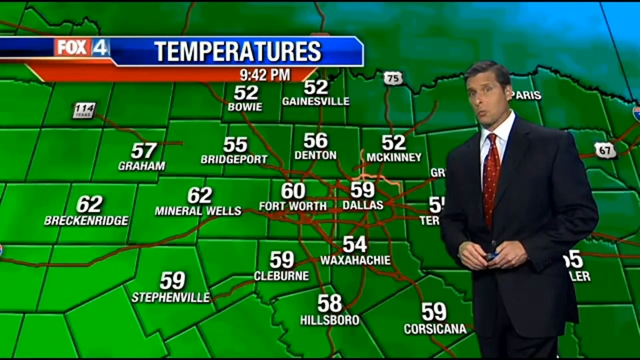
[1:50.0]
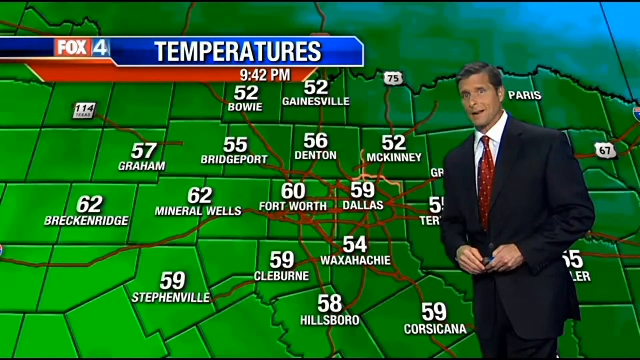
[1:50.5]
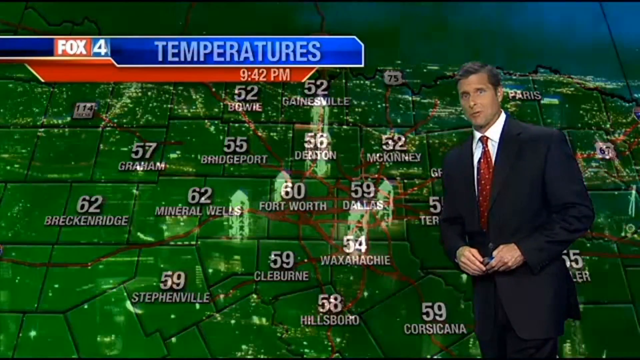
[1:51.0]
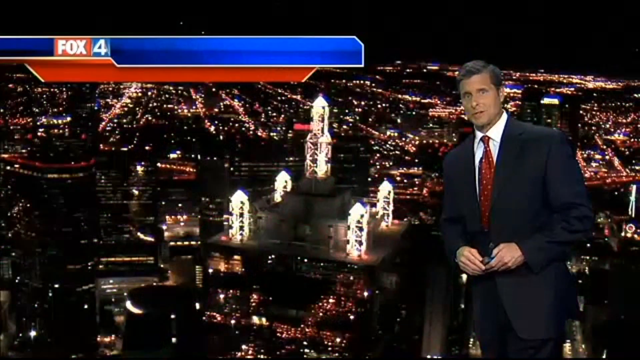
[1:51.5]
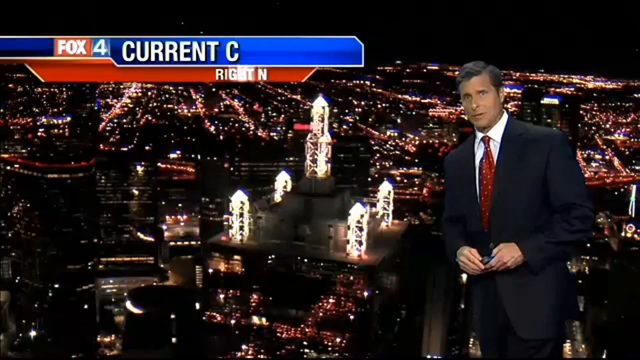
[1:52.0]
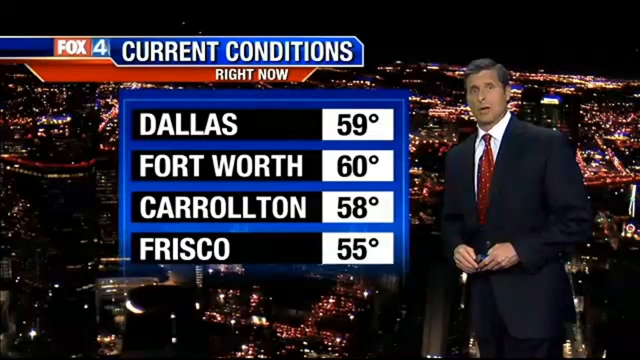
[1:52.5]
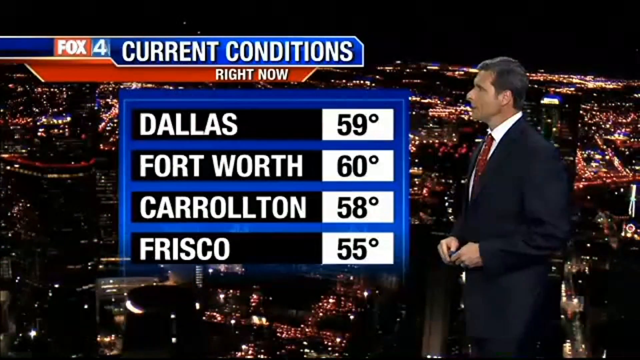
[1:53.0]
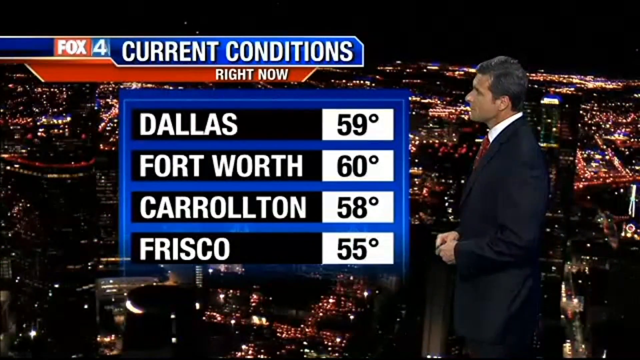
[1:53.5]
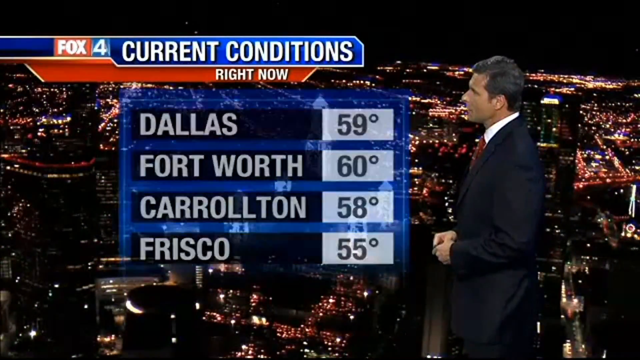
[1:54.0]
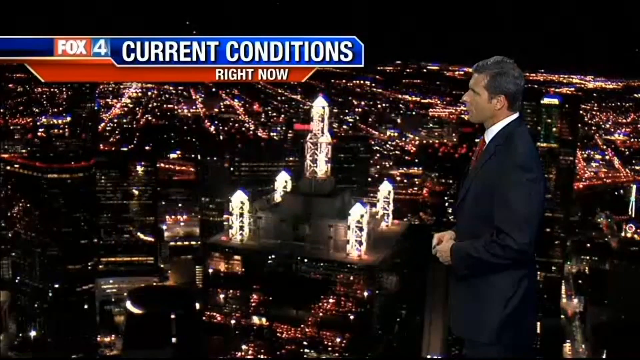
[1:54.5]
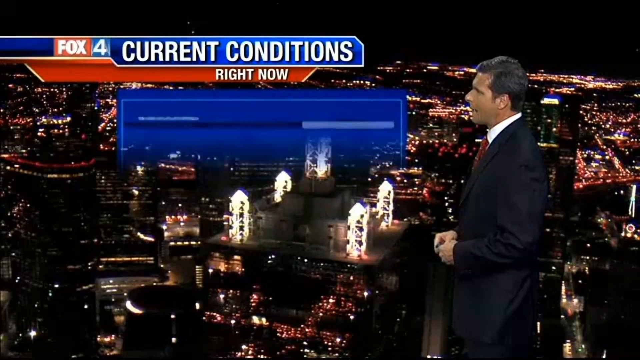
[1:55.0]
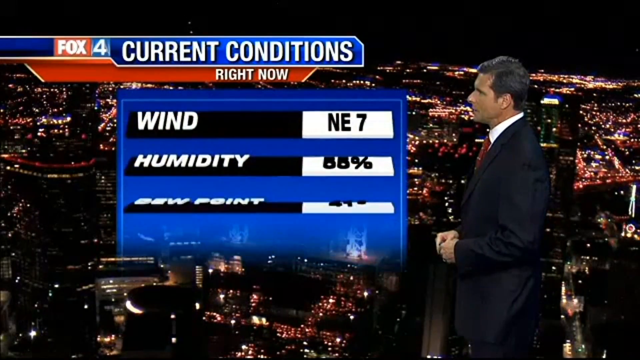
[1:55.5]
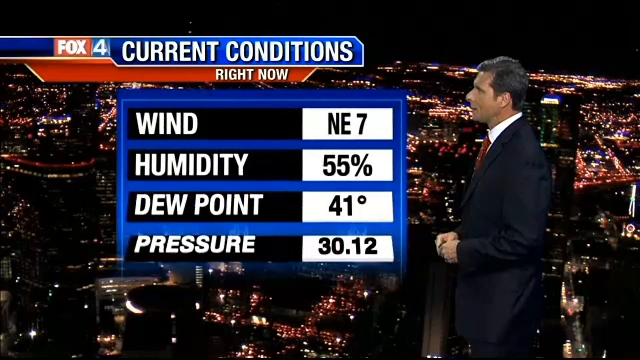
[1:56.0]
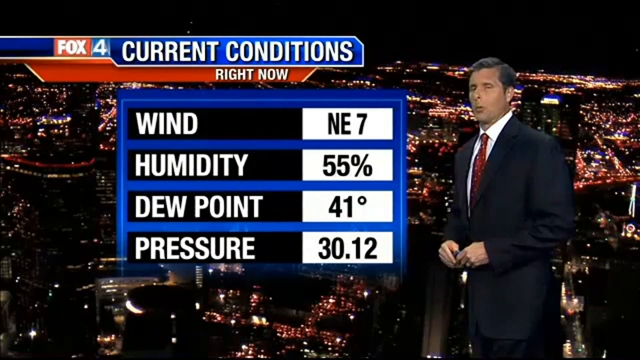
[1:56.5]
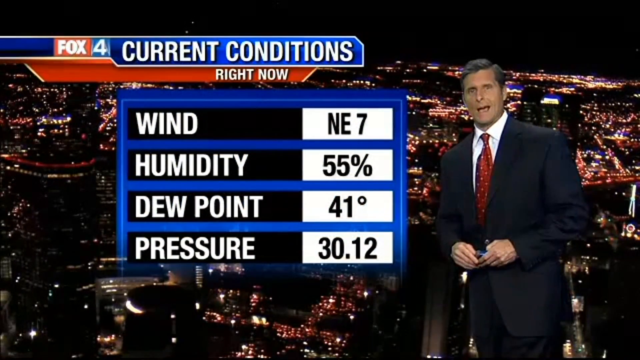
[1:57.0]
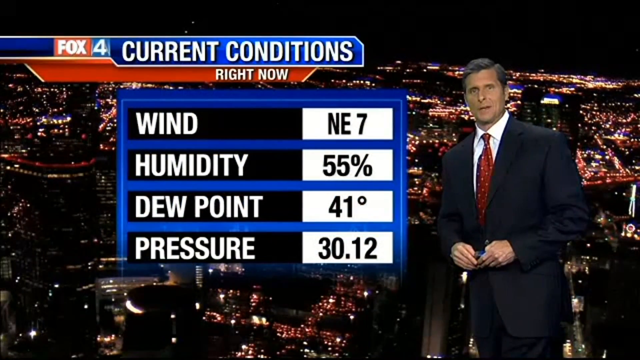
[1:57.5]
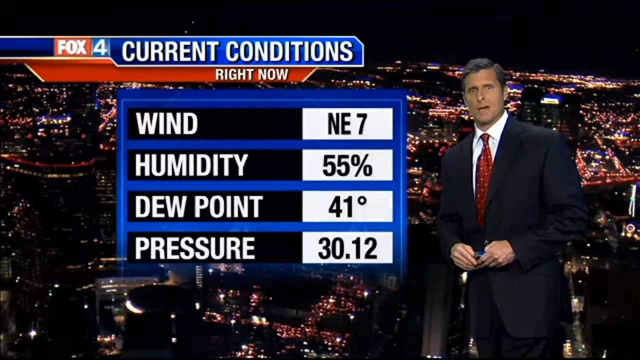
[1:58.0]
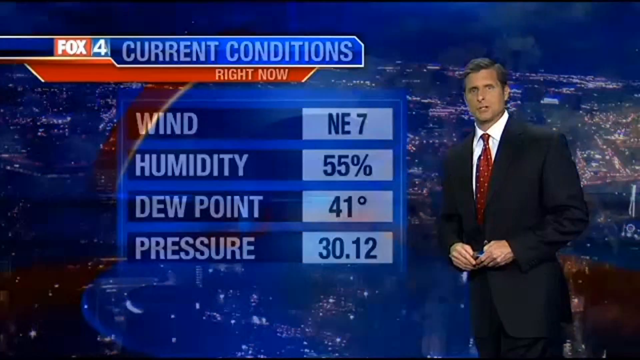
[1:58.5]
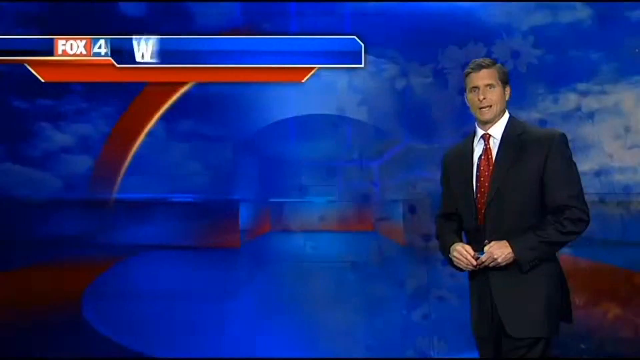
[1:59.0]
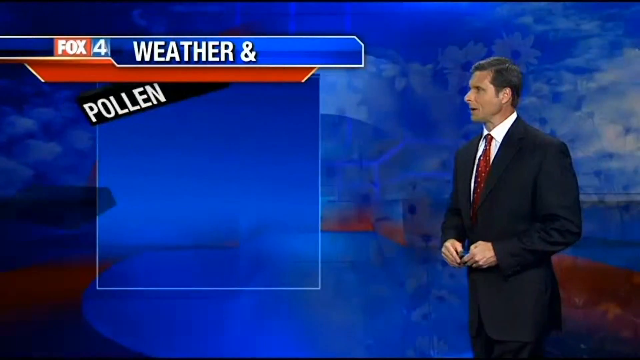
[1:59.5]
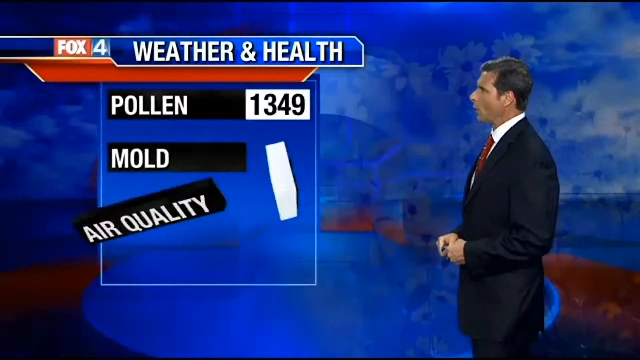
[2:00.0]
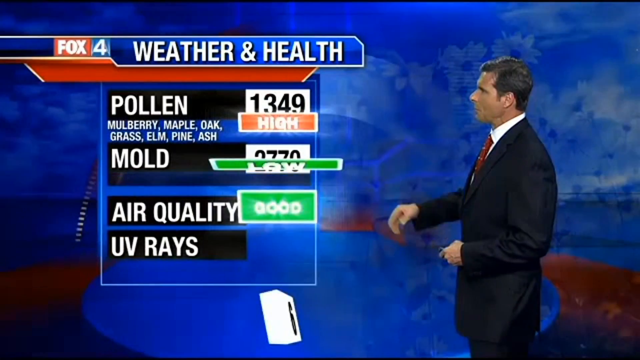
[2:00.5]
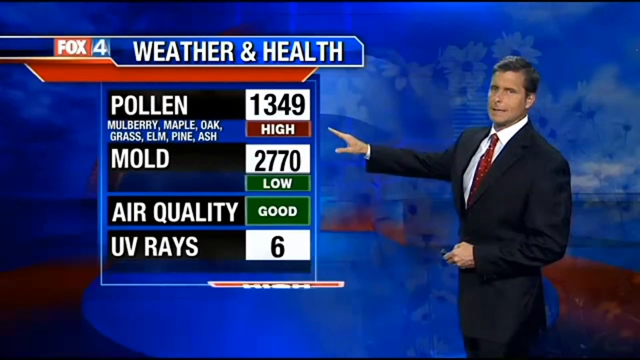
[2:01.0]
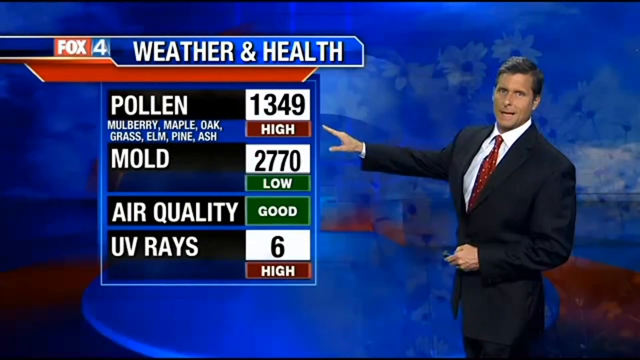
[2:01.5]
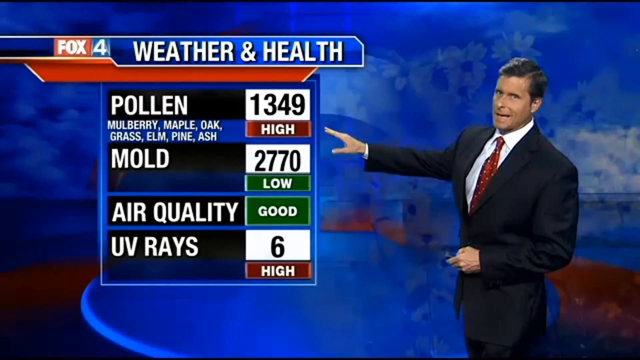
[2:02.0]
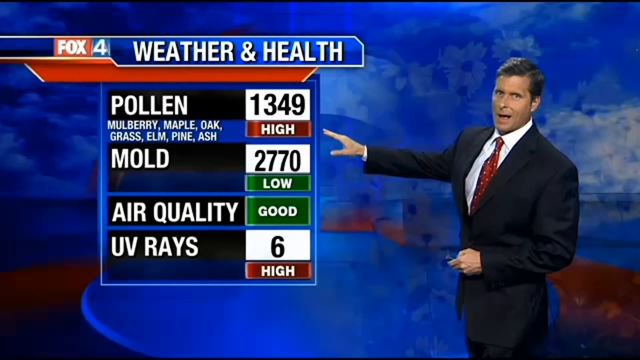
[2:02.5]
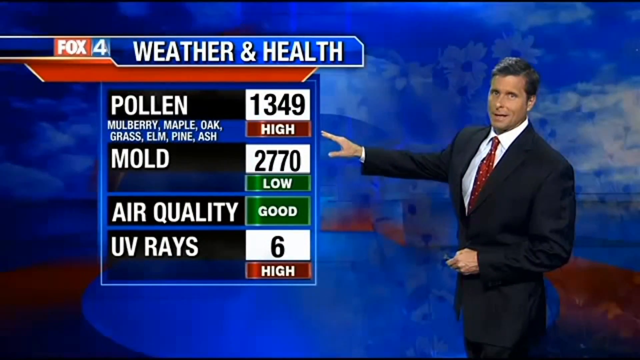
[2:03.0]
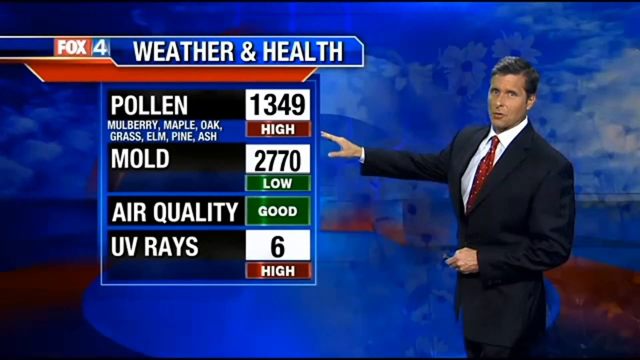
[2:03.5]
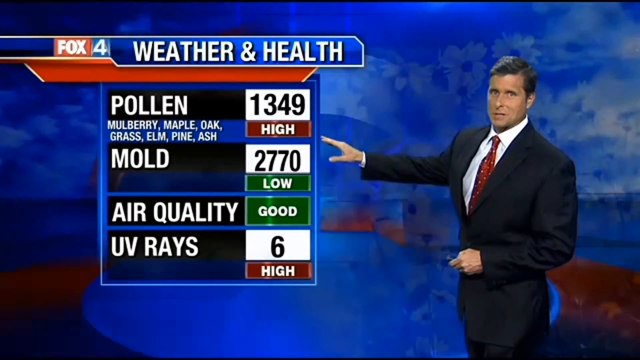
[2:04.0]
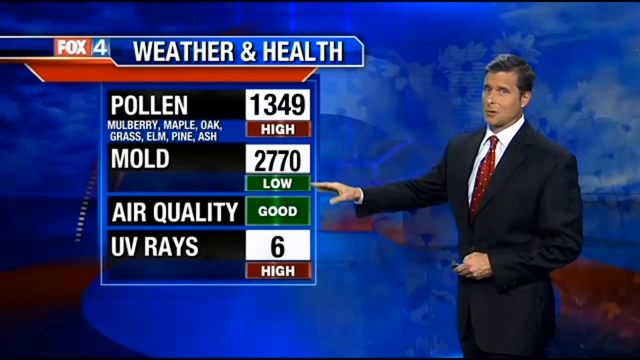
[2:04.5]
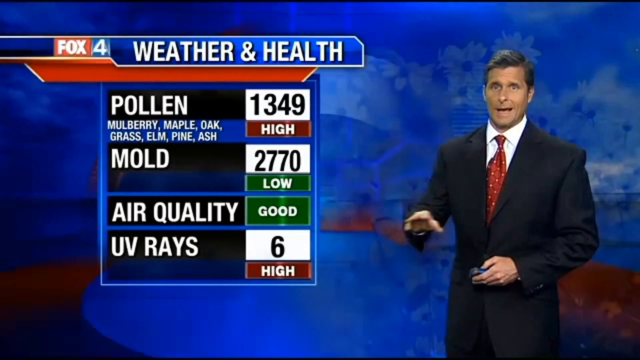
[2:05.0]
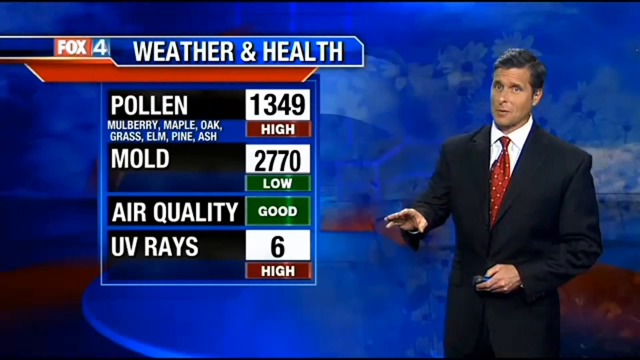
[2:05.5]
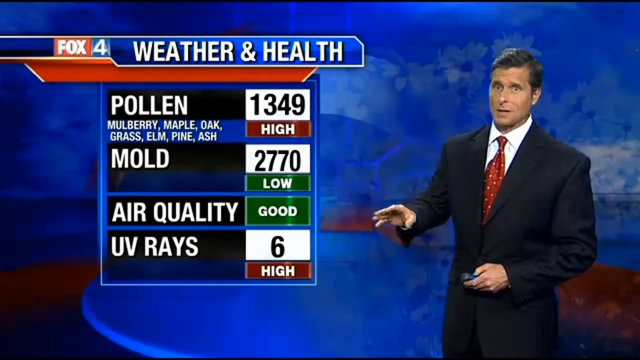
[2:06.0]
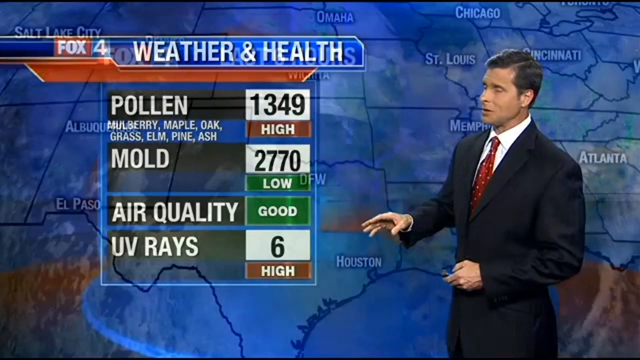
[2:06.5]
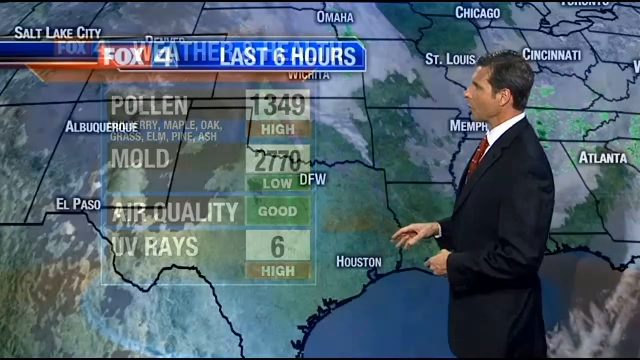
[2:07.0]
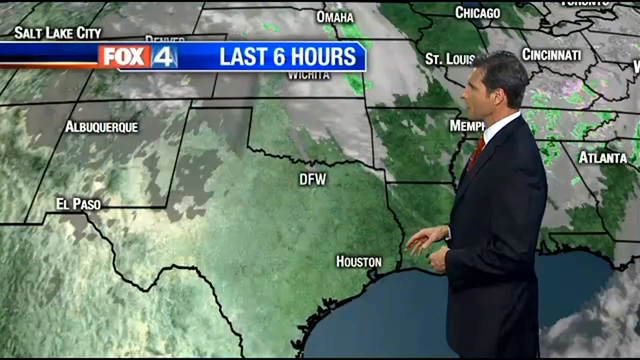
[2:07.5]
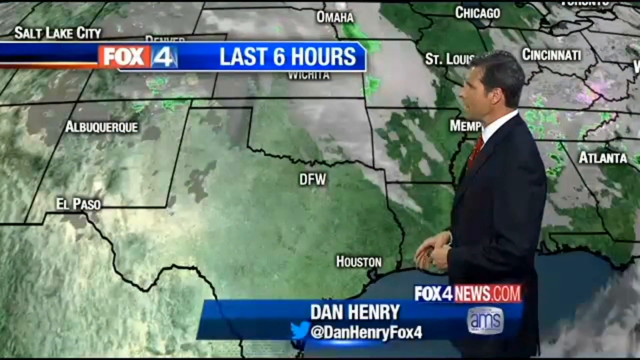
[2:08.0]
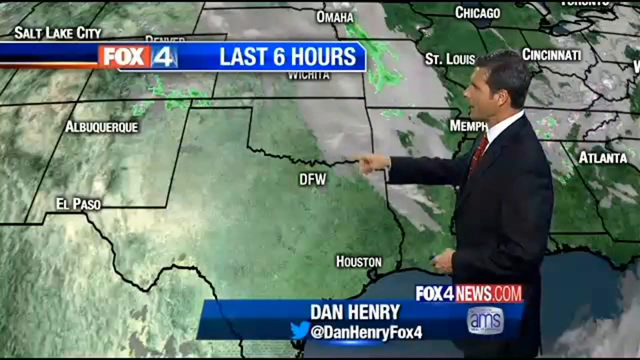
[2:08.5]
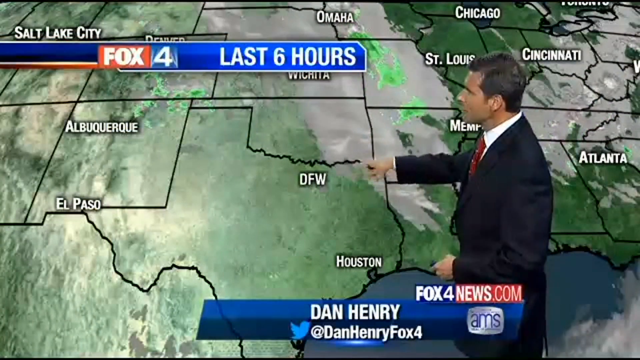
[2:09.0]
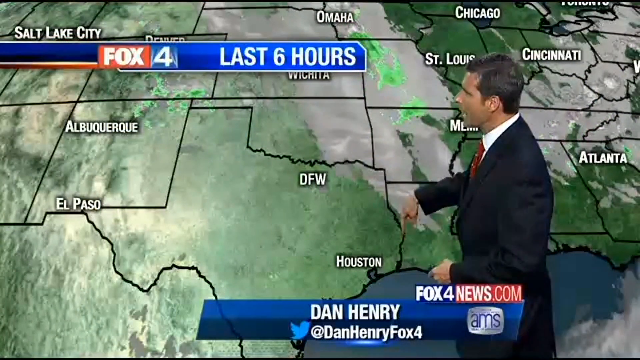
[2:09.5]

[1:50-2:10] A weatherman is on the right side of the screen, and behind him is a green map of what looks like the center of the United States. The state borders are black, and some red lines kind of look like they could be roads. Temperatures appear in white text with names underneath, and a graphic at the top left reads "Fox 4" and "temperatures". The video cuts to a cityscape at night with many lights on; the text at the top changes from "temperatures" to "current conditions", it reads "right now", and four cities, Dallas, Fort Worth, Carleton and Frisco, are shown with the temperature in each. That graphic disappears and a new one appears with four labels, "wind", "humidity", "dew point" and "pressure", with the statistics in black text on the right side. It cuts to another graphic with a blue and red background and "weather and health" in the foreground; a table has white text on the left reading "pollen", "mold", "air quality" and "UV rays", with numbers on the right. That image disappears and another map of the United States appears with some clouds on it.